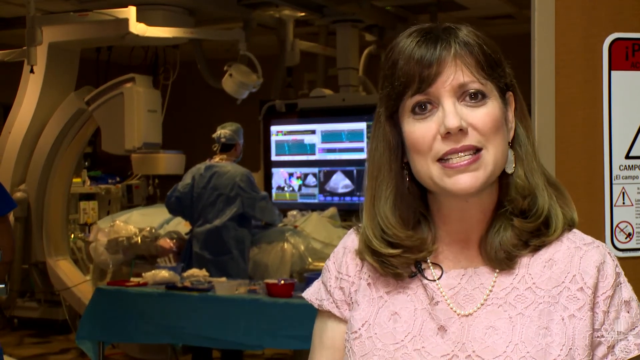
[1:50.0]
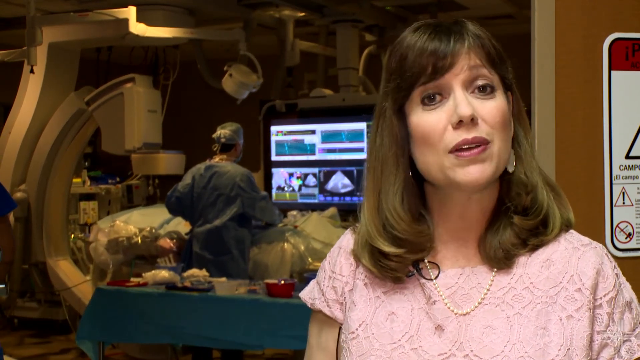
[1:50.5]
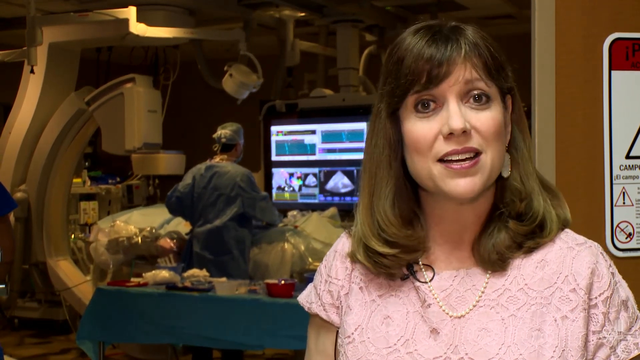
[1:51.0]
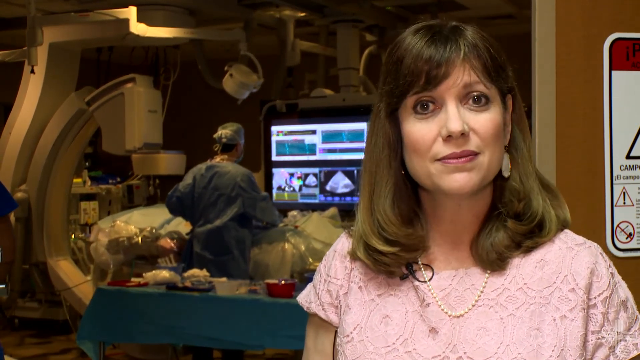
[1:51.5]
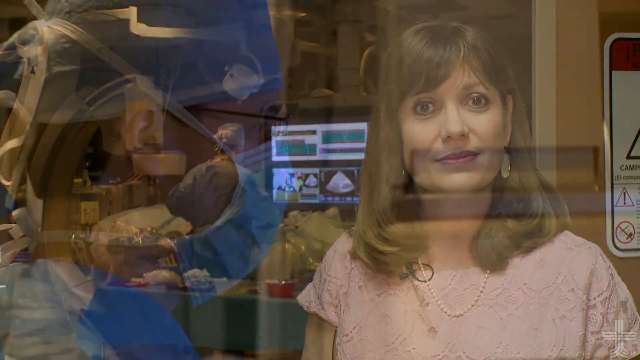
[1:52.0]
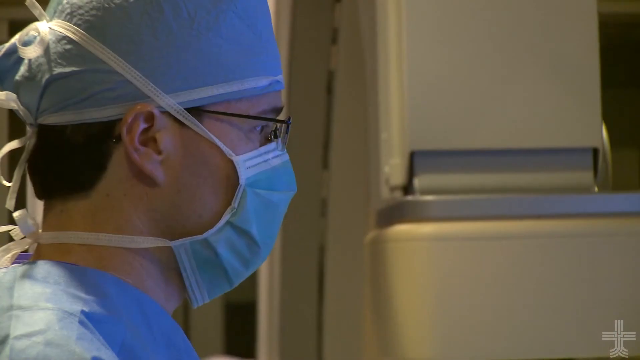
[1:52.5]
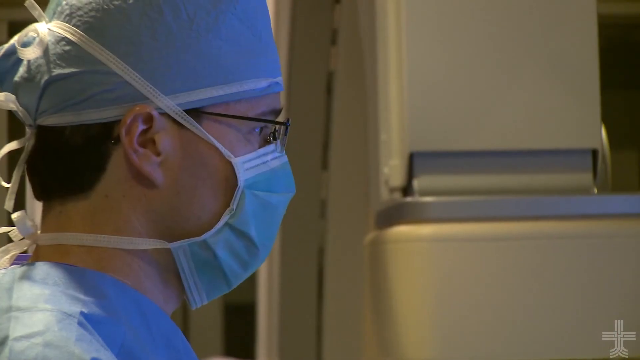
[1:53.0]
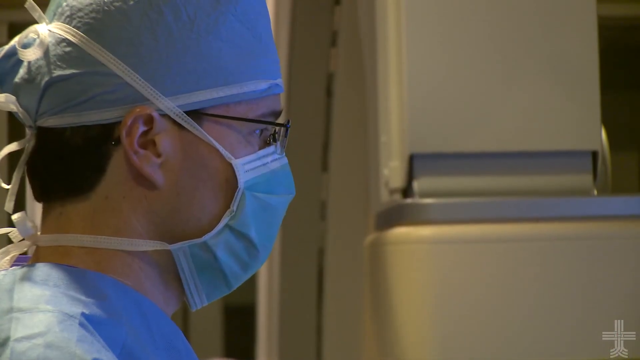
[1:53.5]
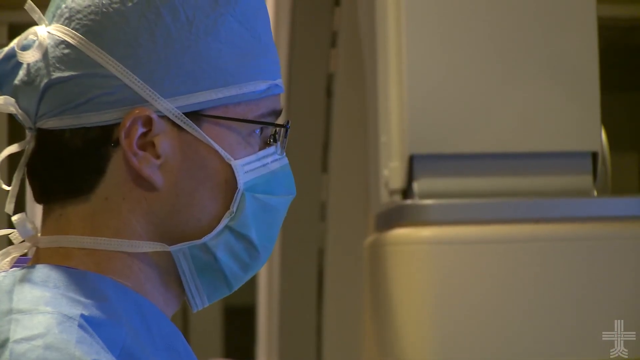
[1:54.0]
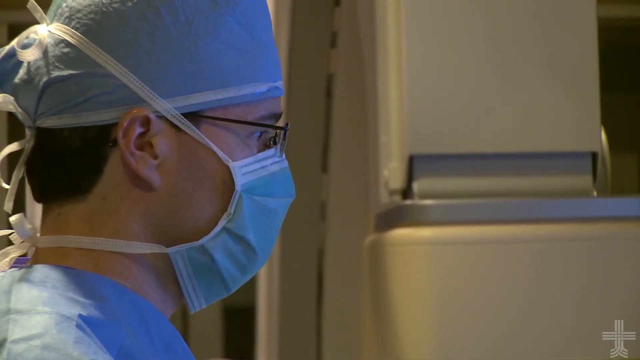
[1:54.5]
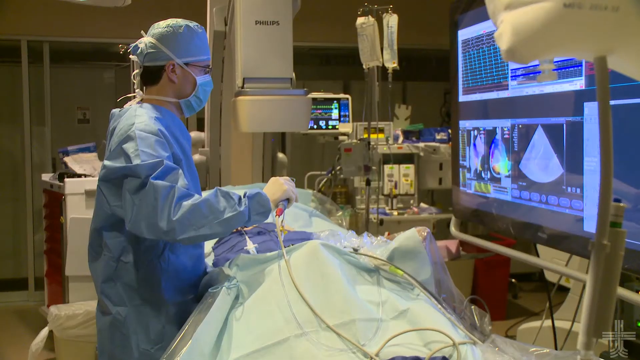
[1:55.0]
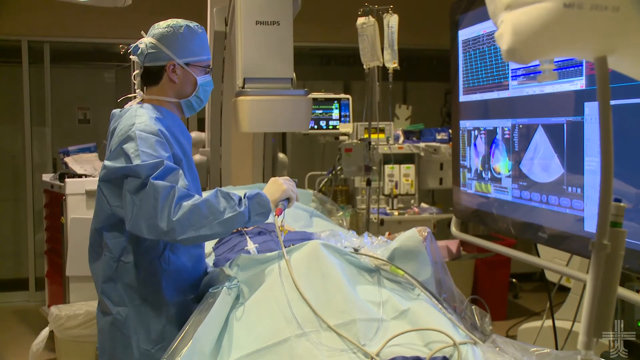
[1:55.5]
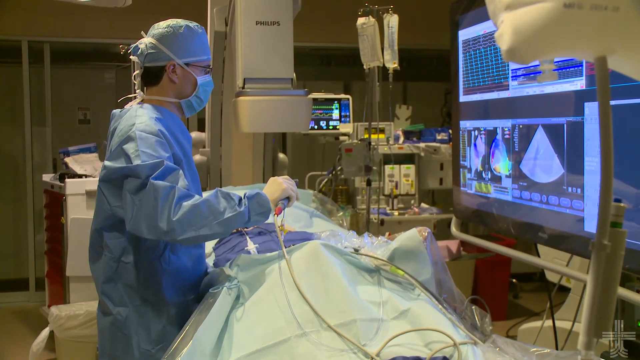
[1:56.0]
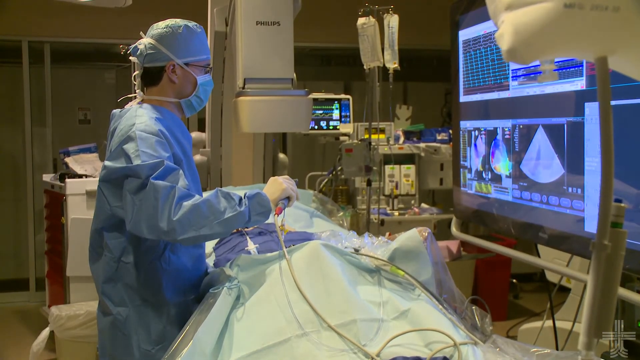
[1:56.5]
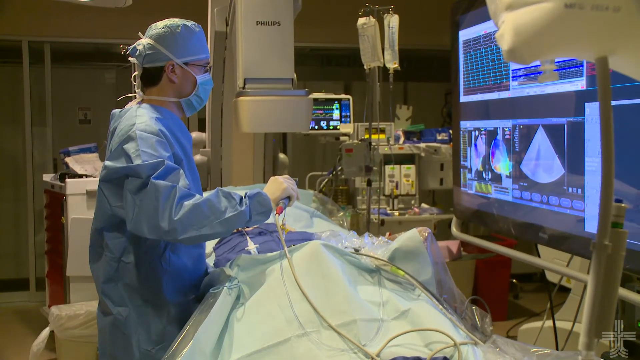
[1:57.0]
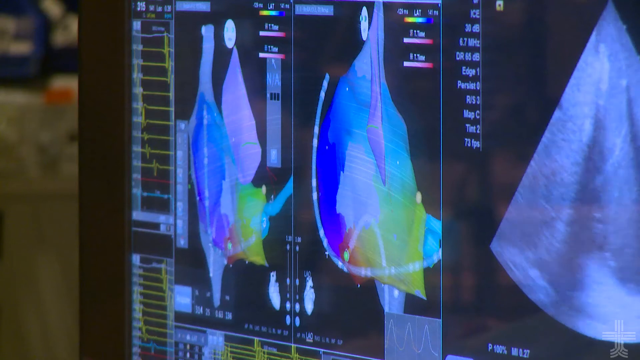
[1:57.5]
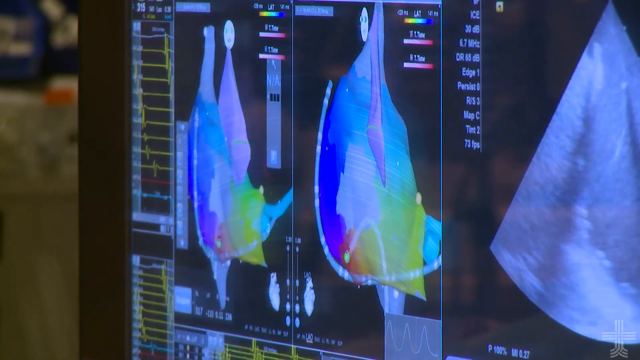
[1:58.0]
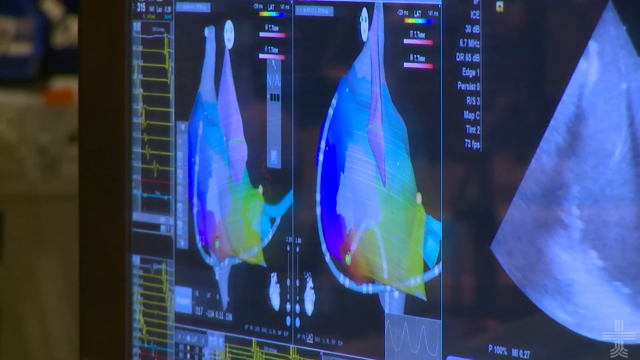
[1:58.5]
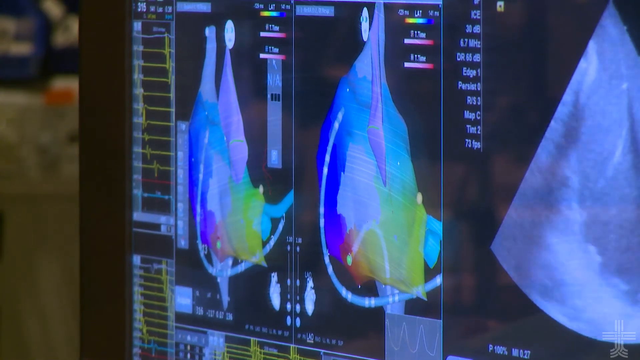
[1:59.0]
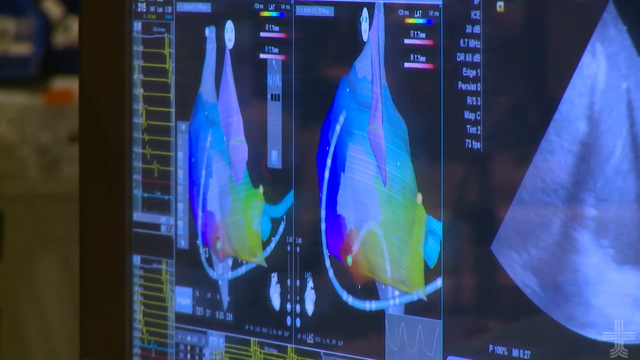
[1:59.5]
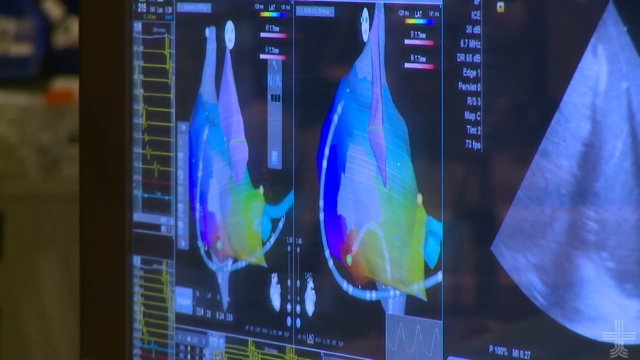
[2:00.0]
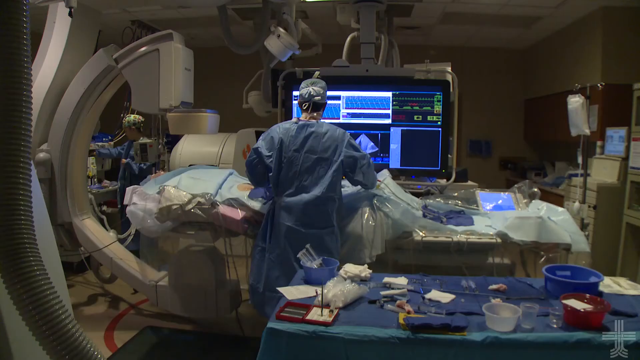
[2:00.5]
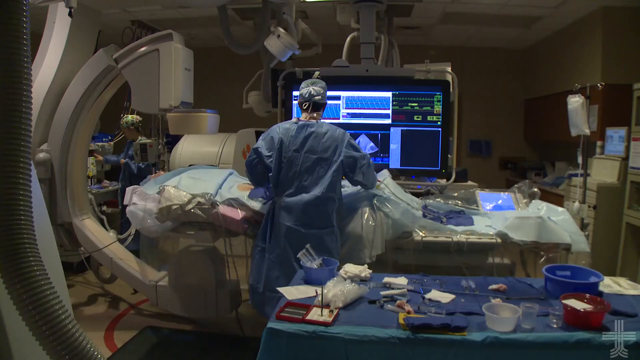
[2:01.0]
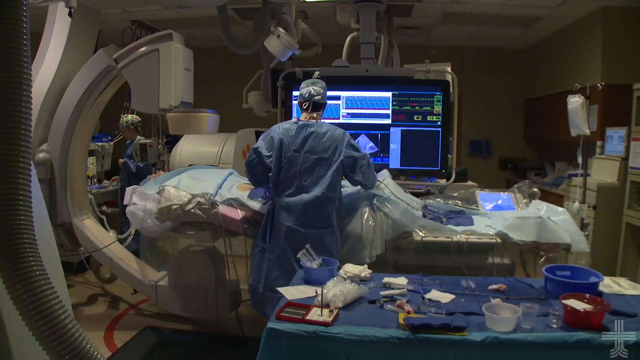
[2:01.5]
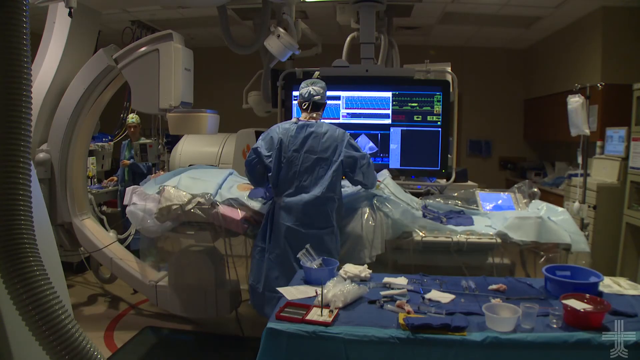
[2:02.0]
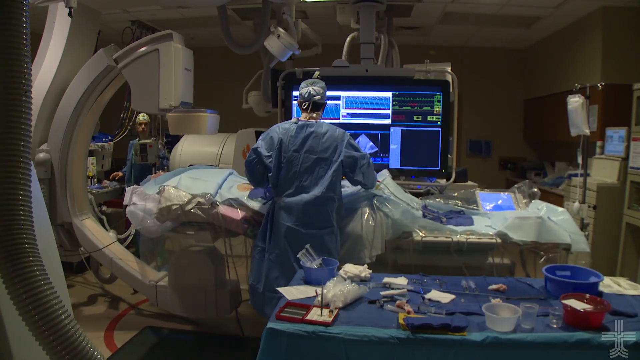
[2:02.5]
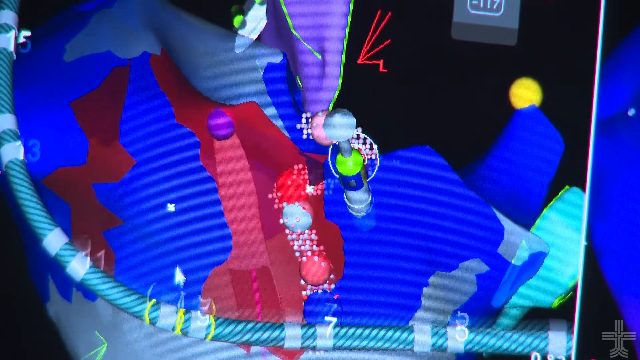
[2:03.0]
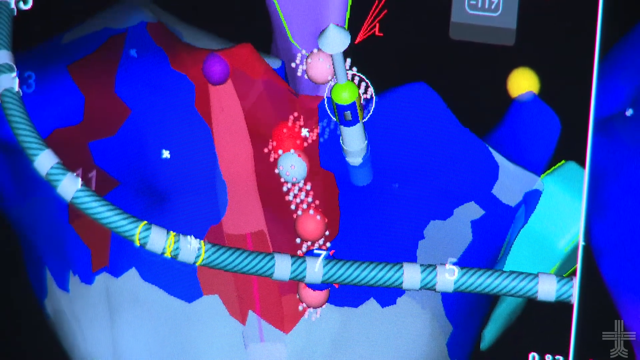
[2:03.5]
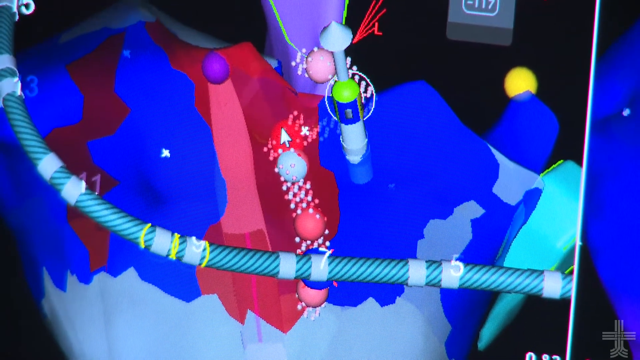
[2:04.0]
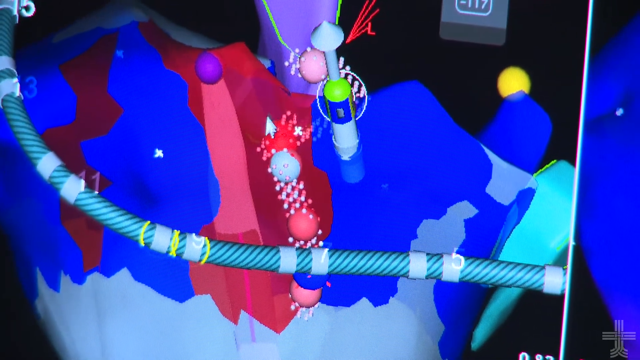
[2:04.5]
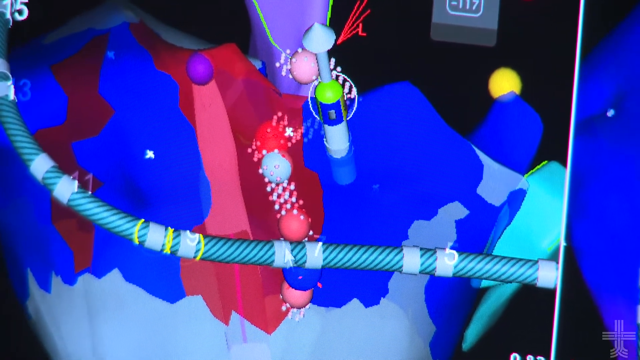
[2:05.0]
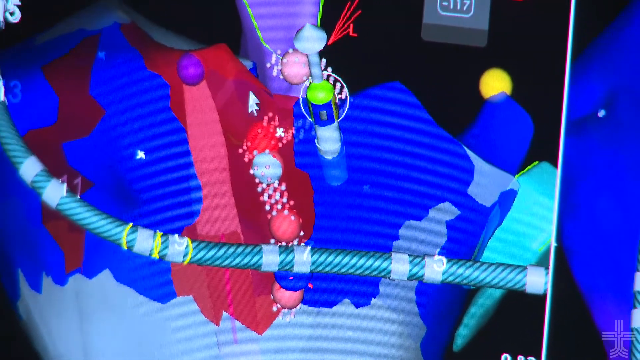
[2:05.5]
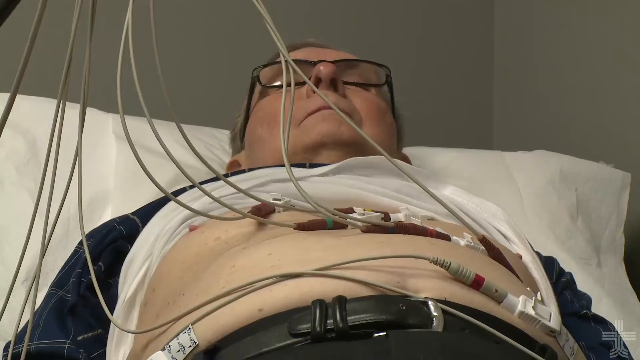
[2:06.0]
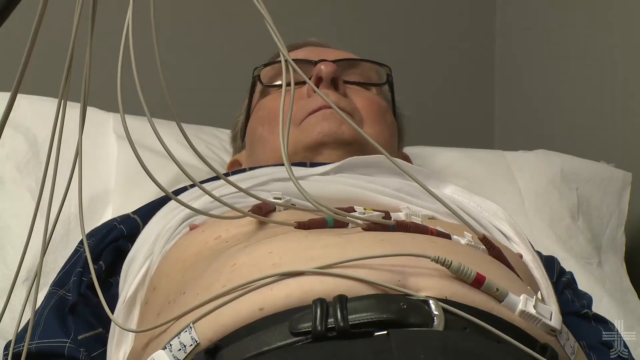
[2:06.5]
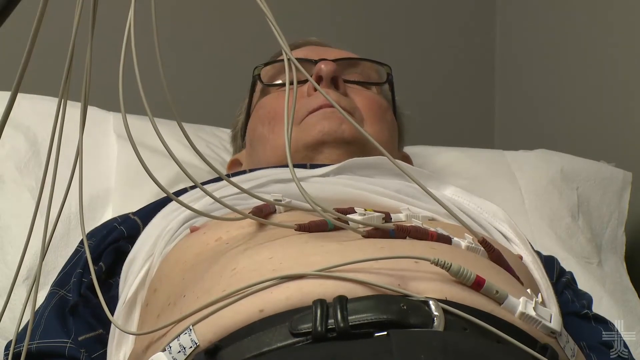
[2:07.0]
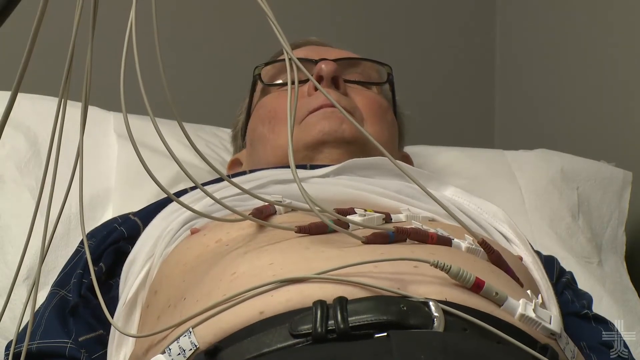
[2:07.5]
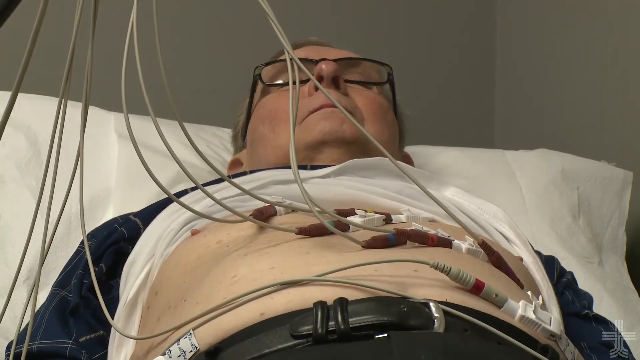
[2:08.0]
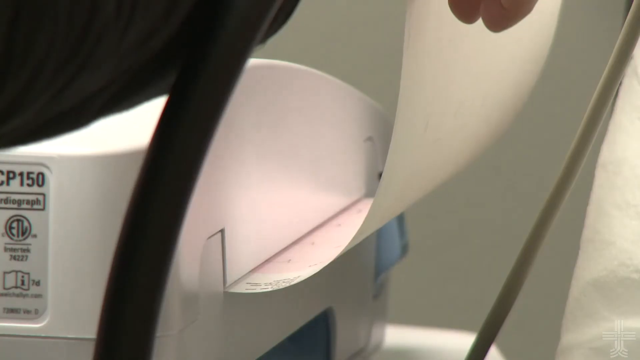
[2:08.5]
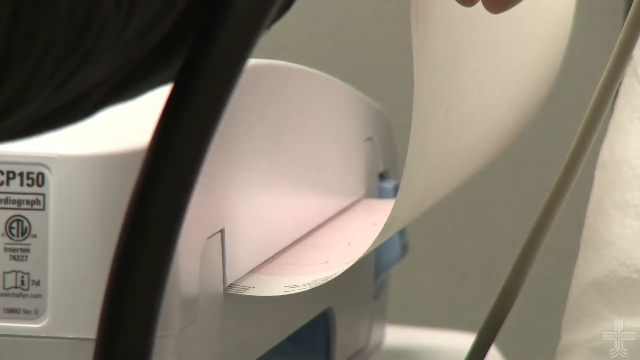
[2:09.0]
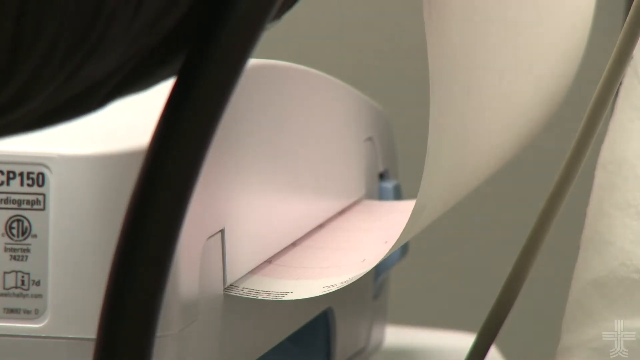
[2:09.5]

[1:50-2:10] Wendy Rigby stands outside the procedure room in a light pink shirt with a lacy pattern and white pearls. Her hair is approximately shoulder length and light brown, she wears long oval earrings, and she has mascara on. The camera then shifts to focus on the doctor performing the procedure. He wears a blue scrub cap, a blue surgical gown and a mask, with his glasses visible over the mask, and he has brown hair. He intently watches a monitor showing what is going on inside the patient, and appears to be moving an electrode around and touching parts of the patient's heart. The patient is asleep on the table with electrodes all over the chest and stomach; the patient still has most of their clothing on, with the shirt pulled up, and is still wearing glasses. A printout that looks like it has heartbeats on it then prints out of a printer.